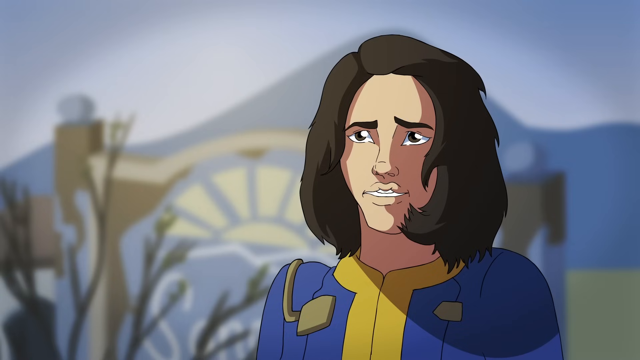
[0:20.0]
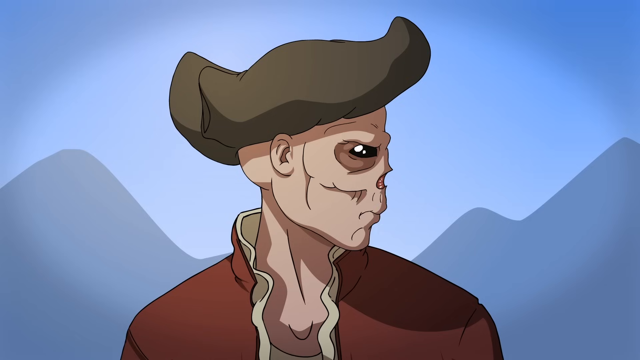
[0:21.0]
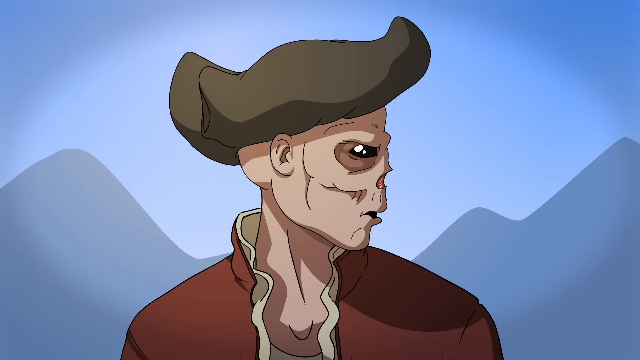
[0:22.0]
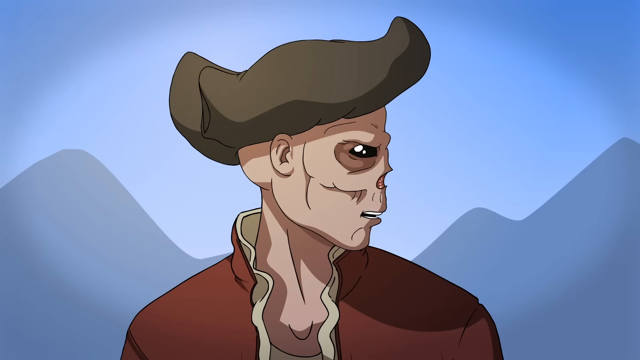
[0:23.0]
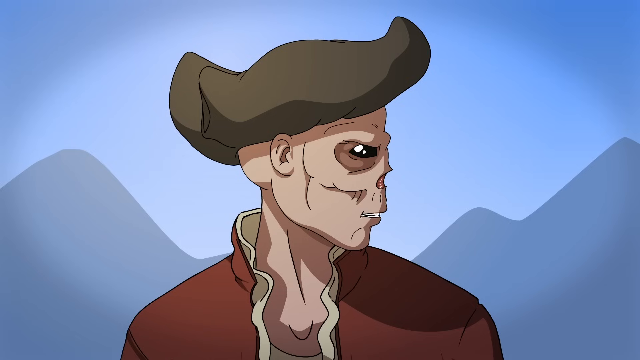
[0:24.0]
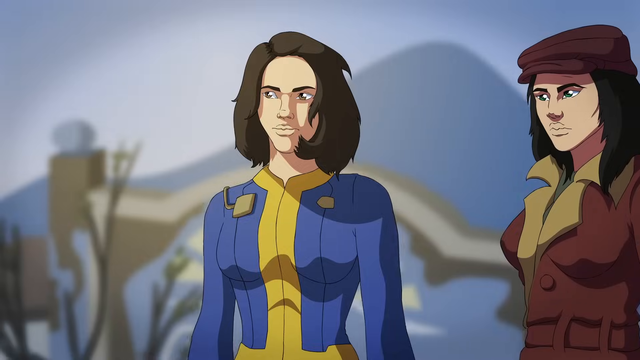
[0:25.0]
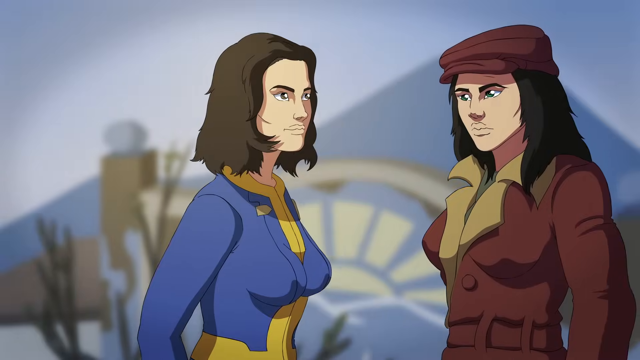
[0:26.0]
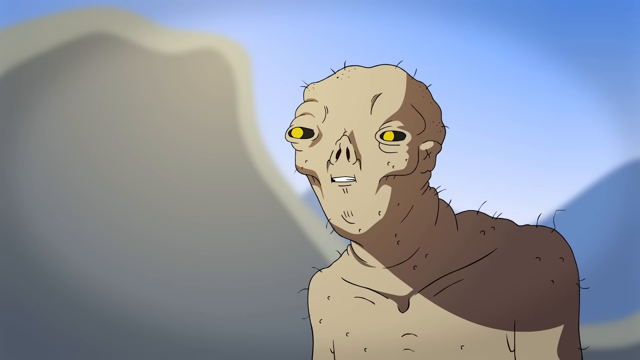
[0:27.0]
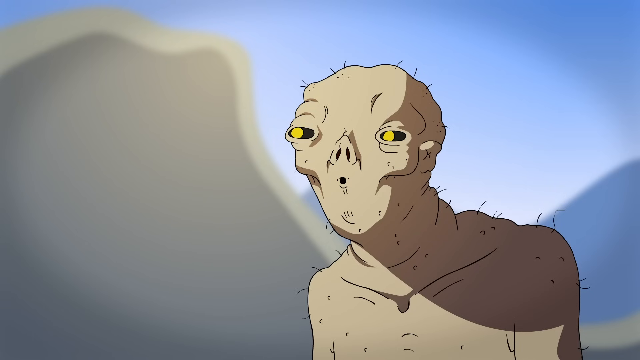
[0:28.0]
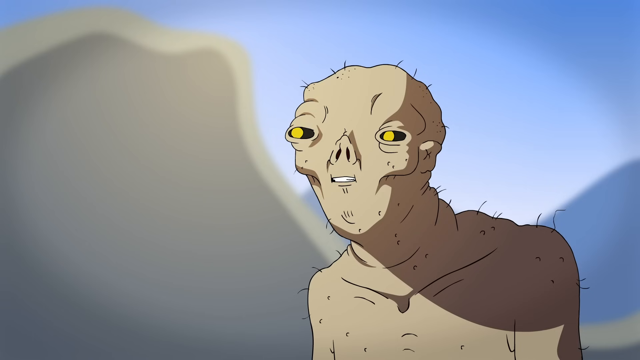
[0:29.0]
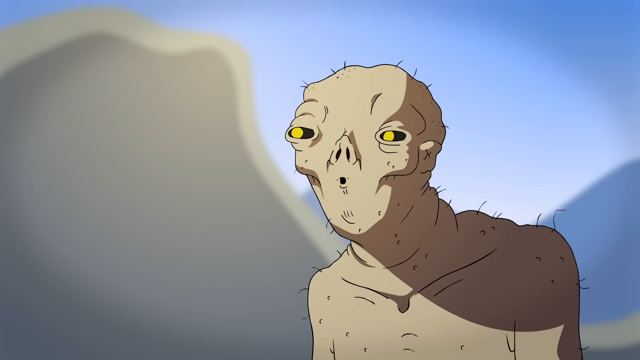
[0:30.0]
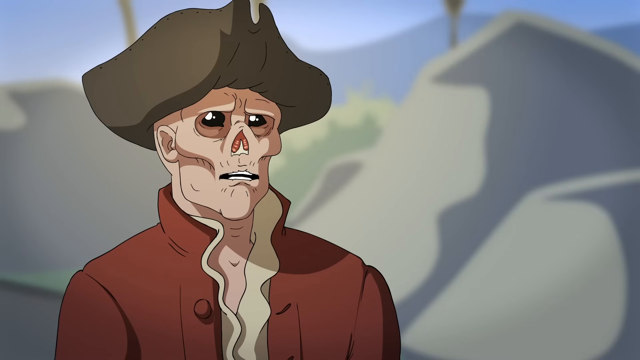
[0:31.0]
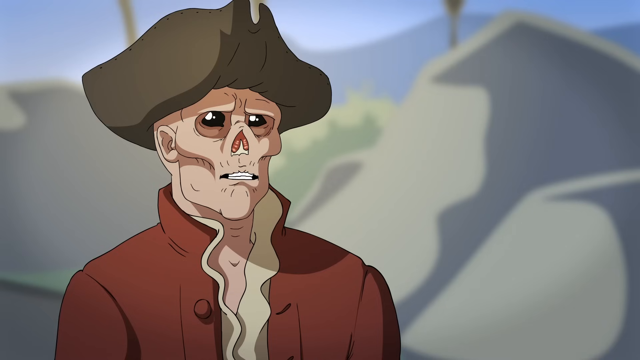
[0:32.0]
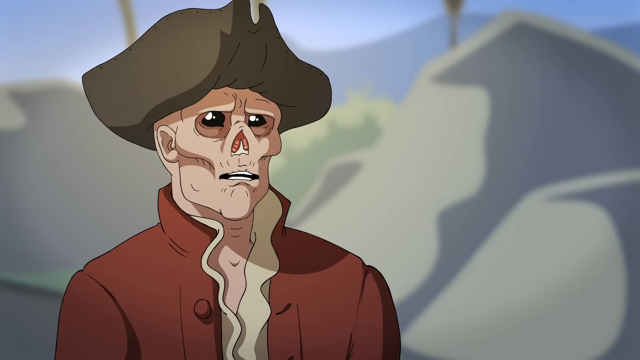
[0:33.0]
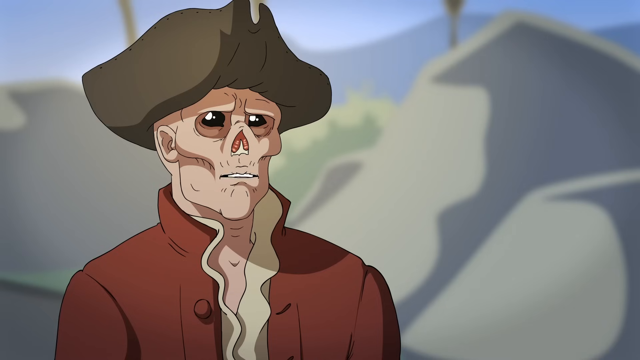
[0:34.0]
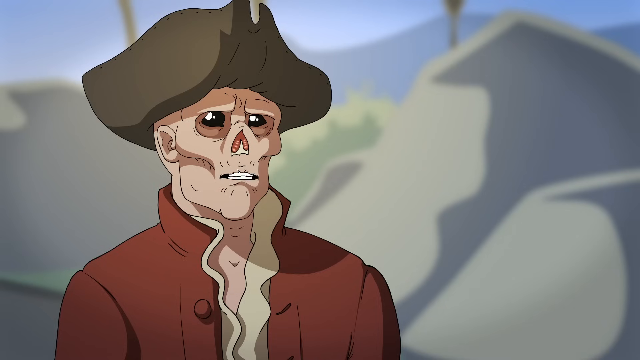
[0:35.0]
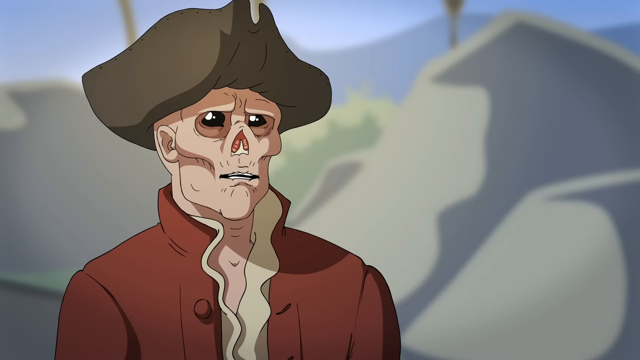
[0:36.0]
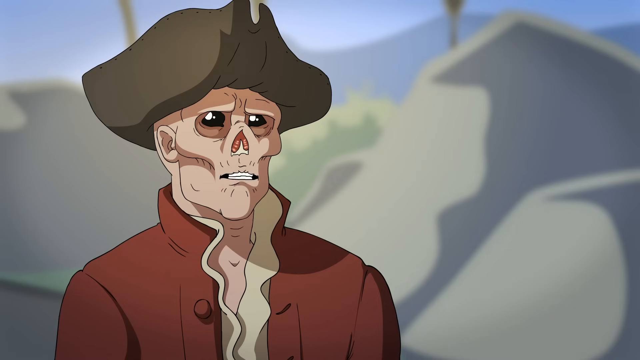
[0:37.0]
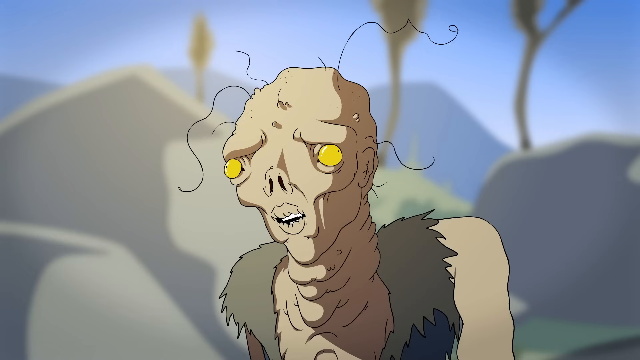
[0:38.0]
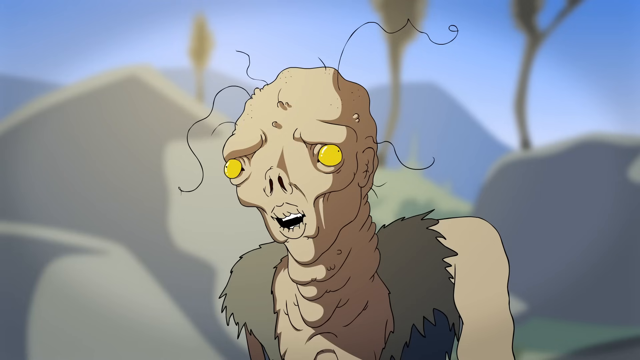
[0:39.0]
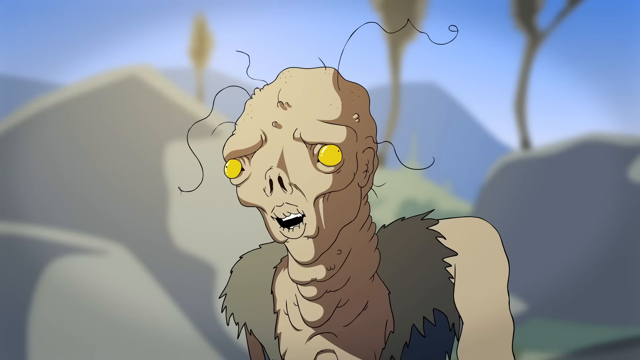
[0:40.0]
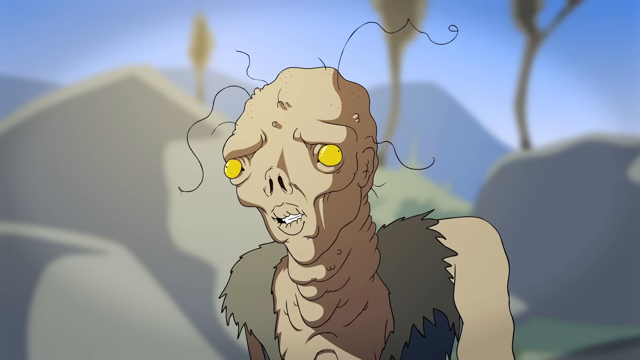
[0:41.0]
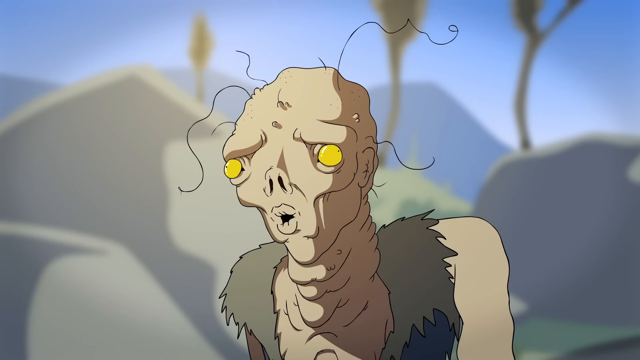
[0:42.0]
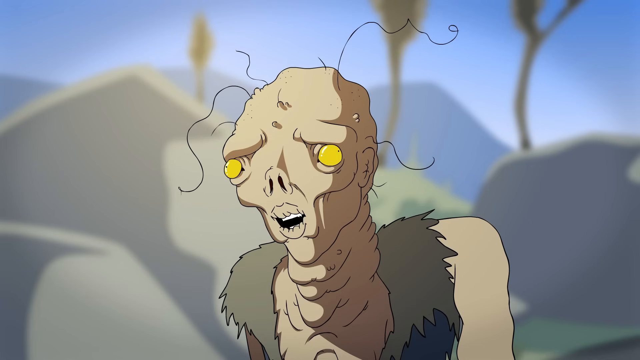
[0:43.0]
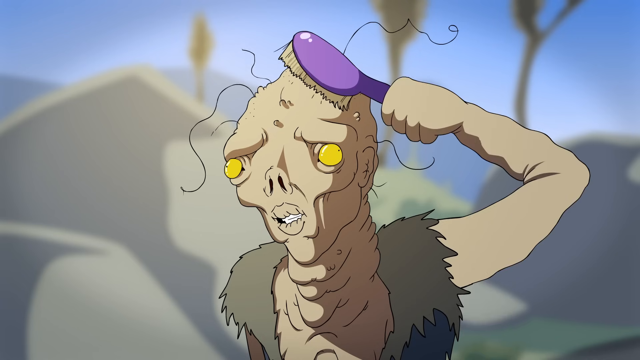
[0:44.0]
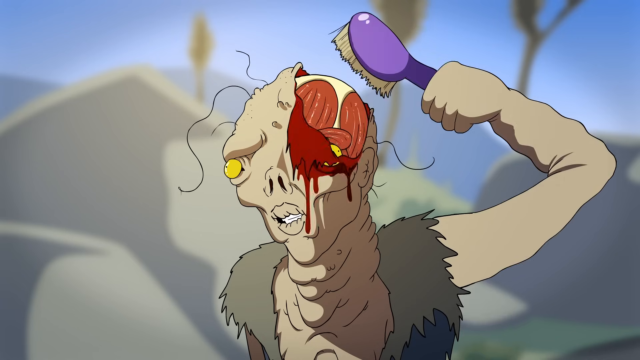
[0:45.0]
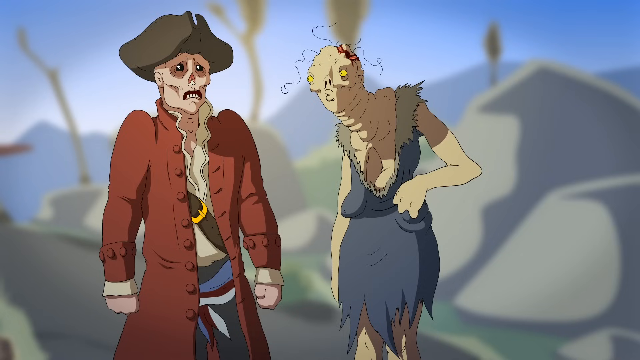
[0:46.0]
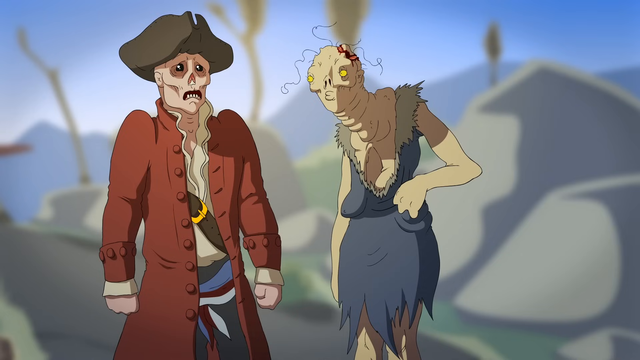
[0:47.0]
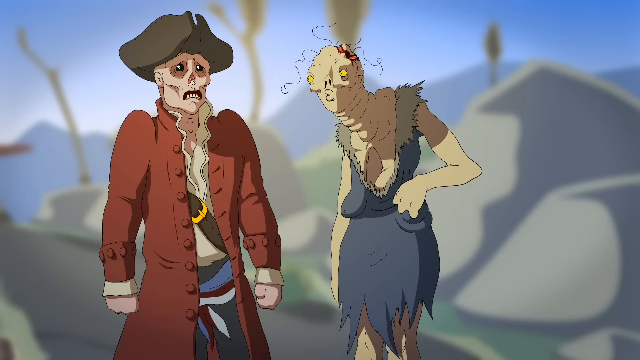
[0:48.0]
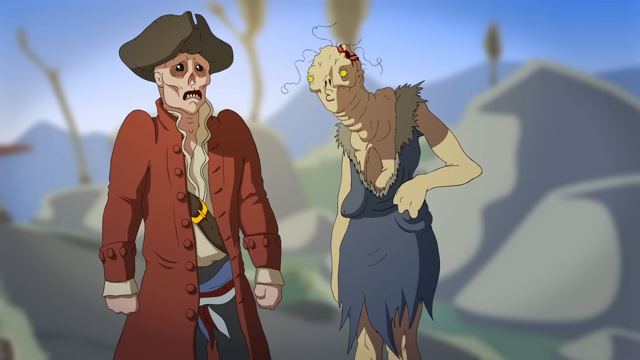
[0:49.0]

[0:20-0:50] A woman in a blue jacket with a yellow collar stands talking. The man with the pirate hat and no nose talks; his body faces the camera while his head is turned to the left to look at her. Behind him are the silhouette of some mountains and a blue sky. The woman in her blue suit turns to a woman on her left and talks. One of the zombie-looking creatures, with yellow eyes, a missing nose and no clothes, has hairs coming out of its head and body here and there; it is speaking, positioned a little off to the right of the frame. The pirate man with no nose talks from the left of the screen. He wears a brownish khaki-colored shirt under the red coat, and in the distance behind him are the stalks of some palm trees.